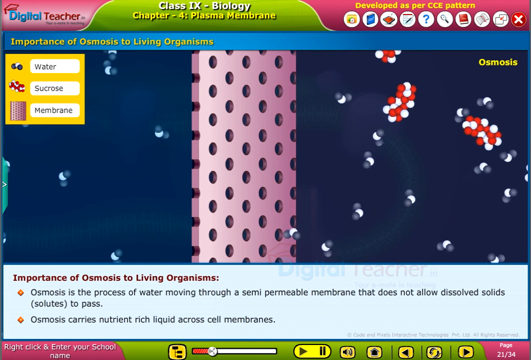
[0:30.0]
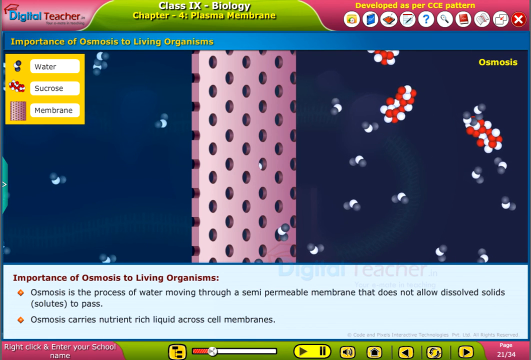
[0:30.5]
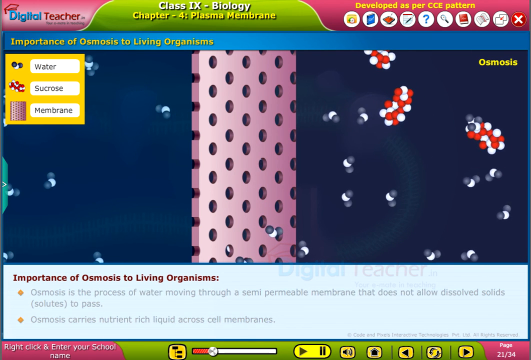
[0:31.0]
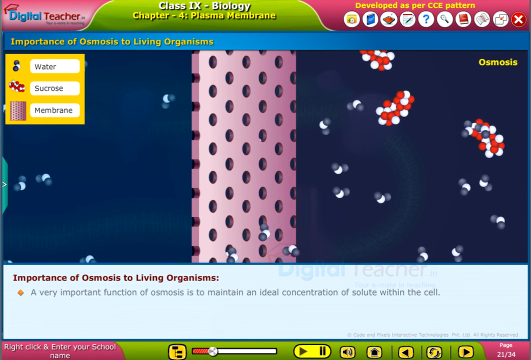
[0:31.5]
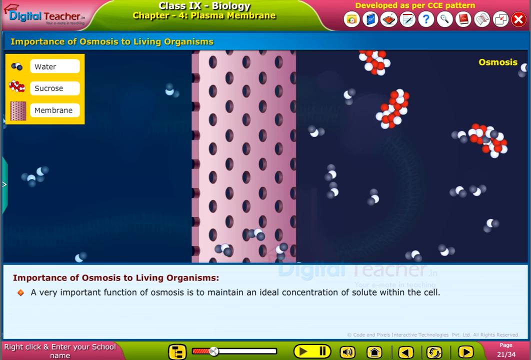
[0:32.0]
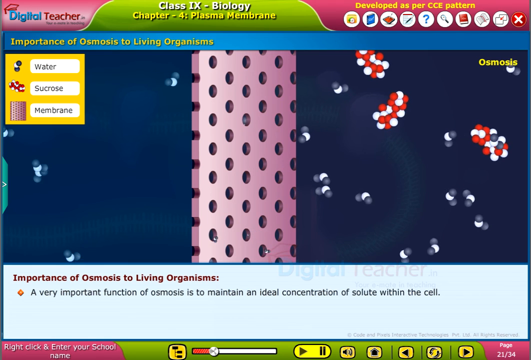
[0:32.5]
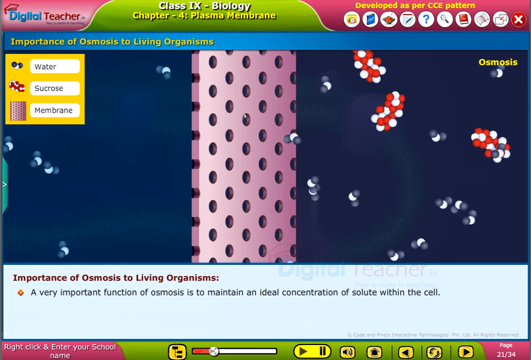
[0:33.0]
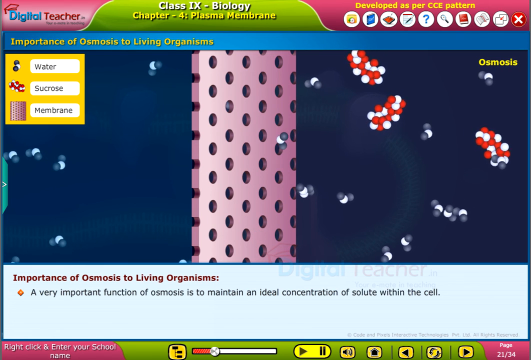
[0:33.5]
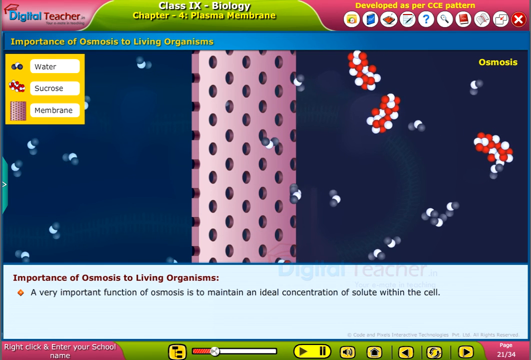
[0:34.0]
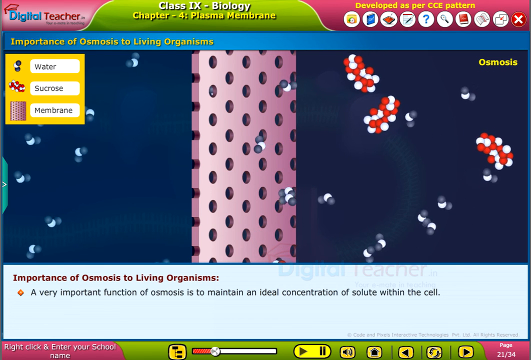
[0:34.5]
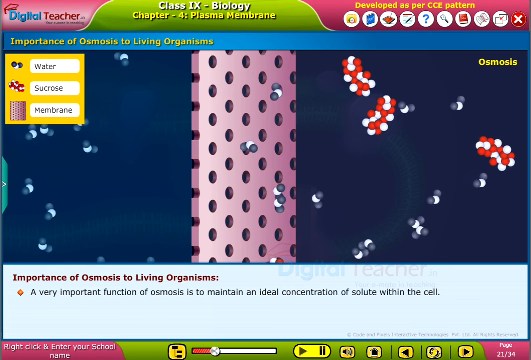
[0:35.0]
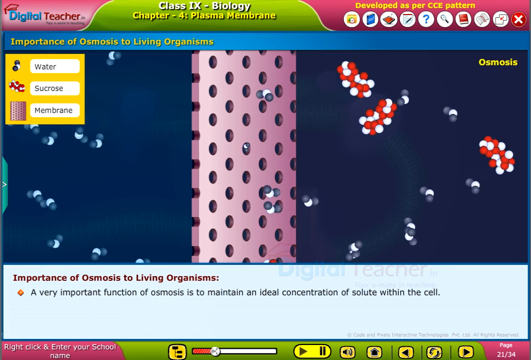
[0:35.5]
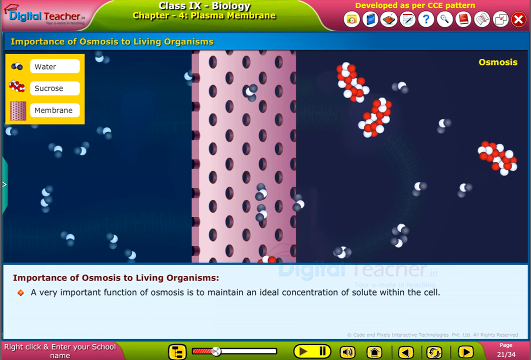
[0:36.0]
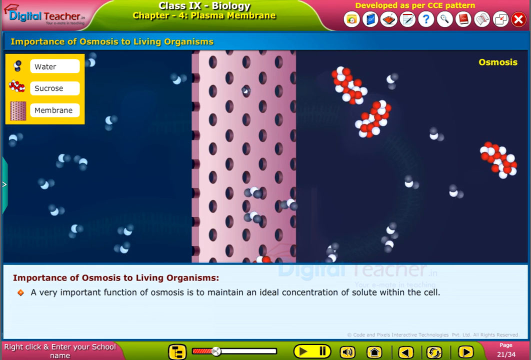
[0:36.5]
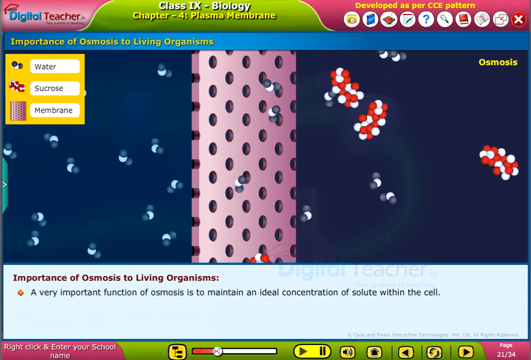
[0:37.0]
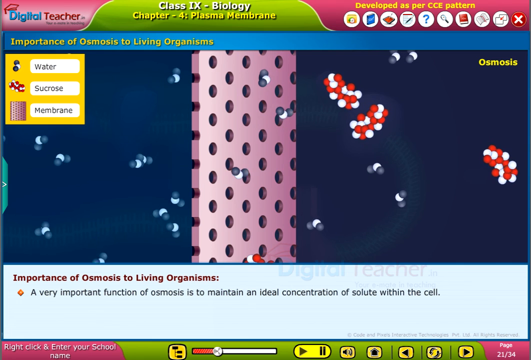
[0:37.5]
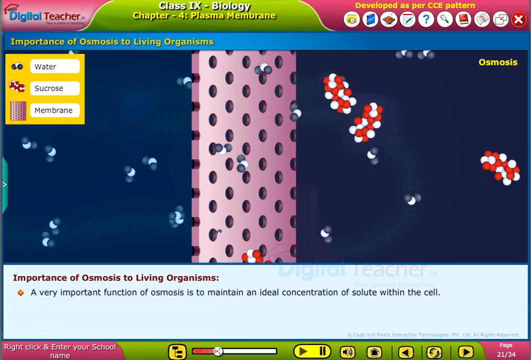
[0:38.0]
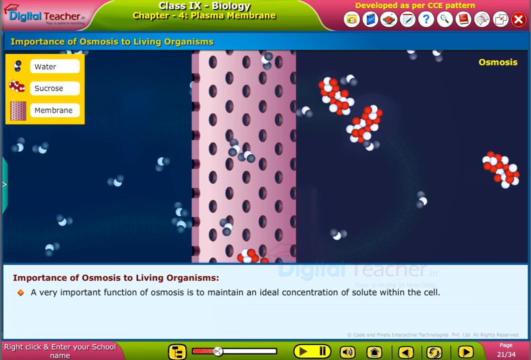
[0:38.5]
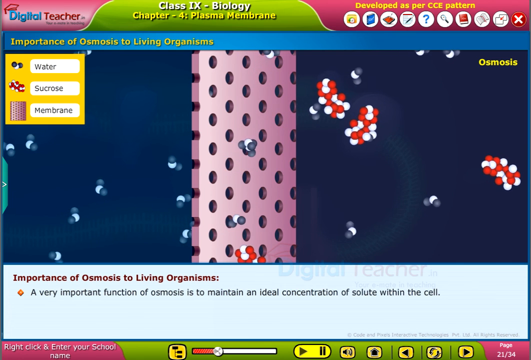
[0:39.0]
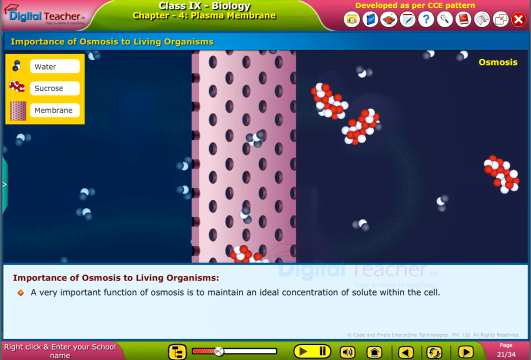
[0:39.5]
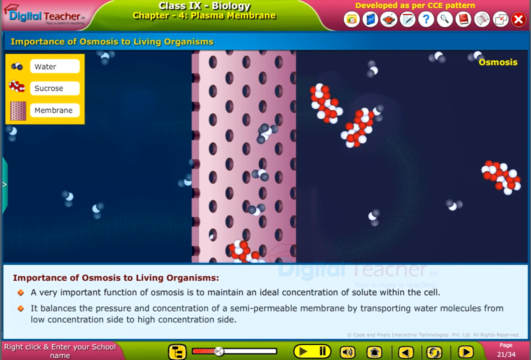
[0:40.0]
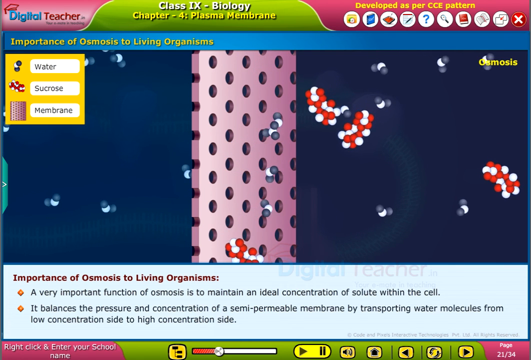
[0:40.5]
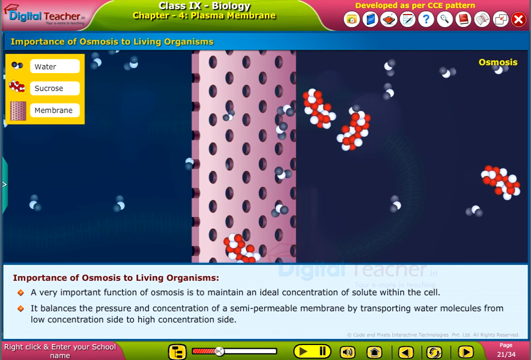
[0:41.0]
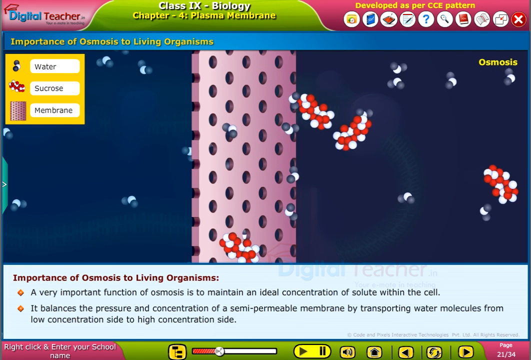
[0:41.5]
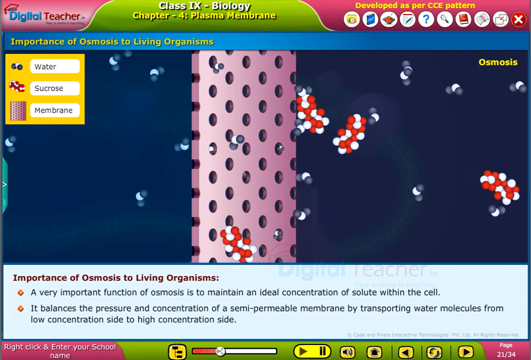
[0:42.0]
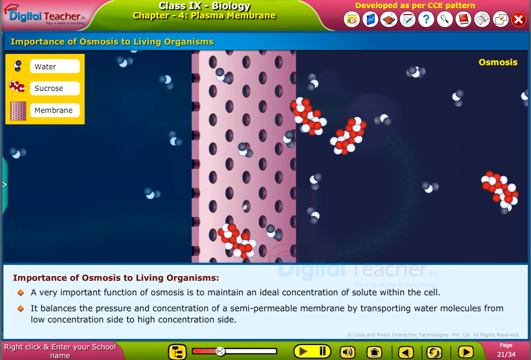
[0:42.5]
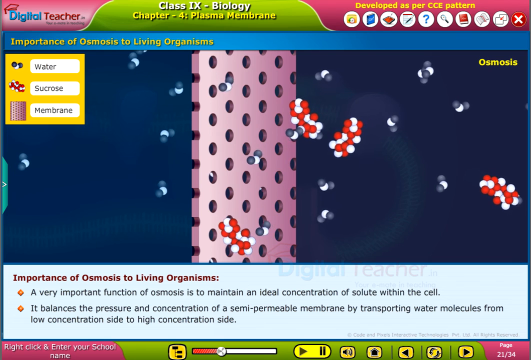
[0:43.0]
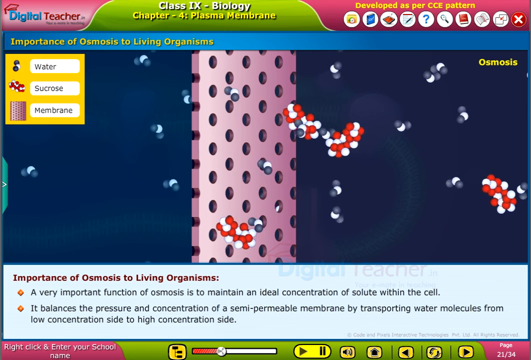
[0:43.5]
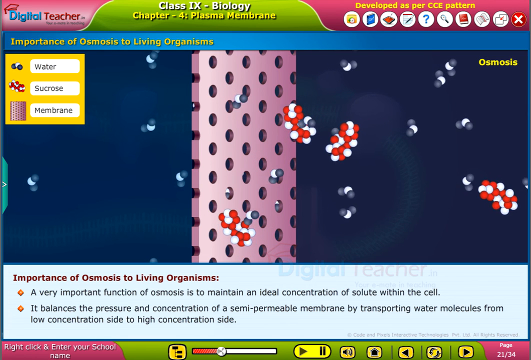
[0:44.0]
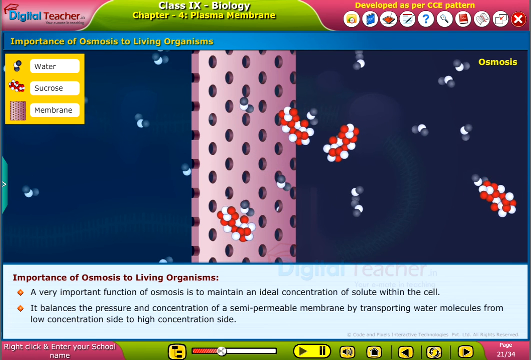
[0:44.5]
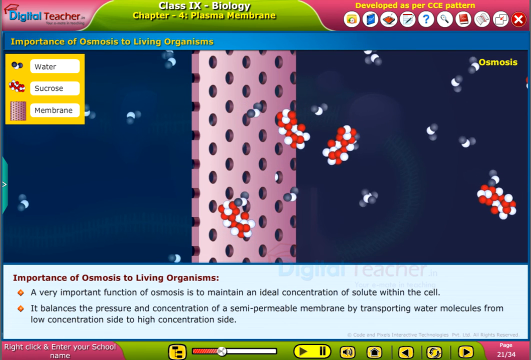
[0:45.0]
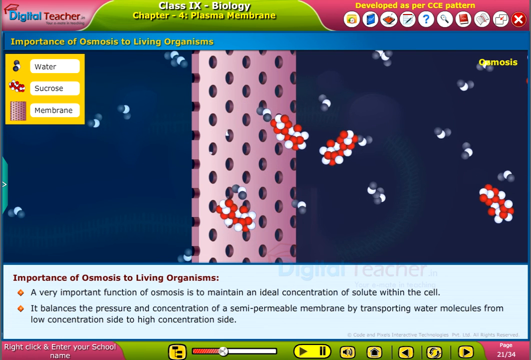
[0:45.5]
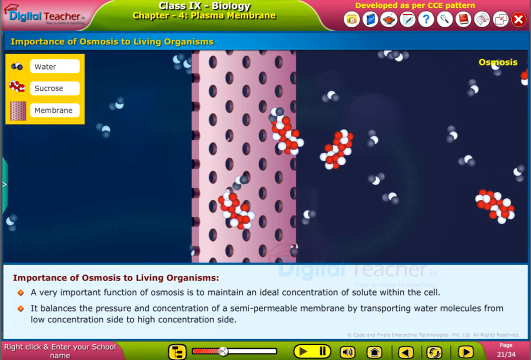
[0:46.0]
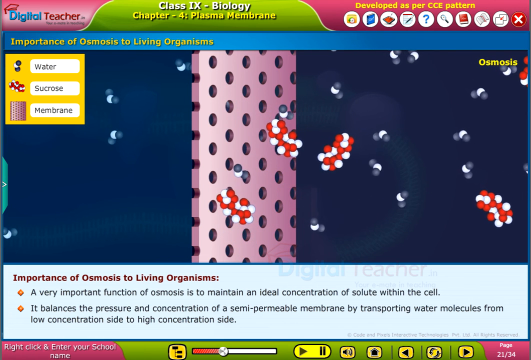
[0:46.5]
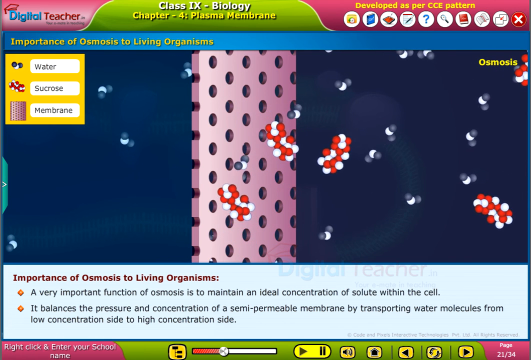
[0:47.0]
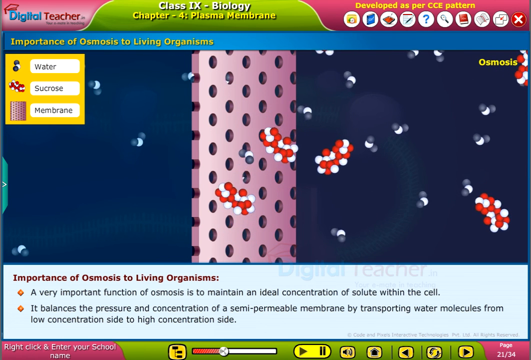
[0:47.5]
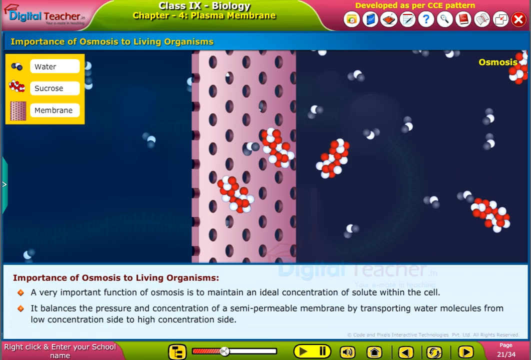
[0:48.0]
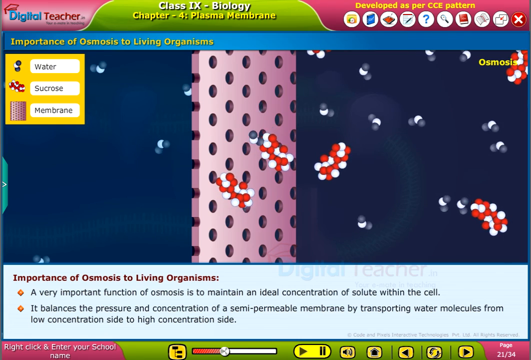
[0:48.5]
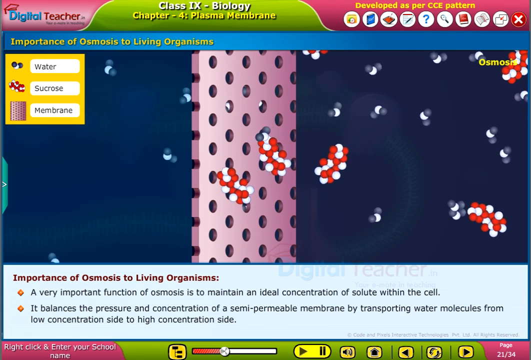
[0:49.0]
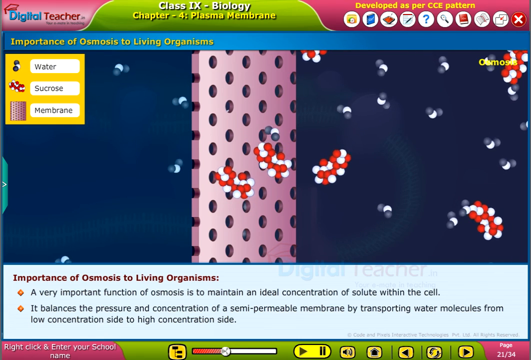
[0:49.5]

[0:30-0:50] The screen shows Chapter 4, Plasma Membrane, for a biology class on the Digital Teacher, with several icons at the top, including the X to exit the program, and the label "developed as per CCE pattern". A pink sponge-like membrane is in the center of the page, with several holes from top to bottom. It illustrates osmosis, with sucrose passing through the membrane and coming out as water. The water is shown as blue molecules and the sucrose as red and white molecules. The information states that osmosis carries nutrient-rich liquid across cell membranes, that its function is to maintain an ideal concentration of solute within the cell, and that the process balances the pressure and concentration across the semi-permeable membrane by transporting water molecules to the high concentration side of the membrane.